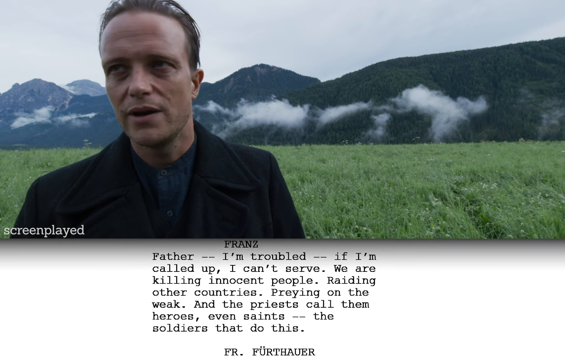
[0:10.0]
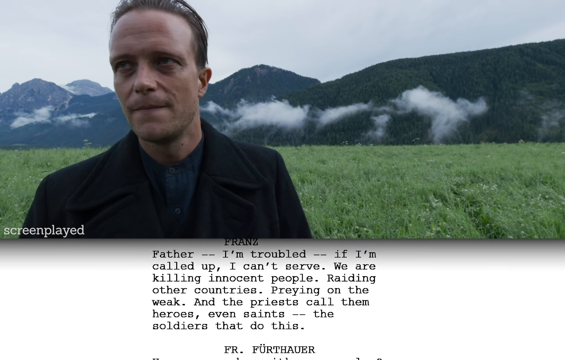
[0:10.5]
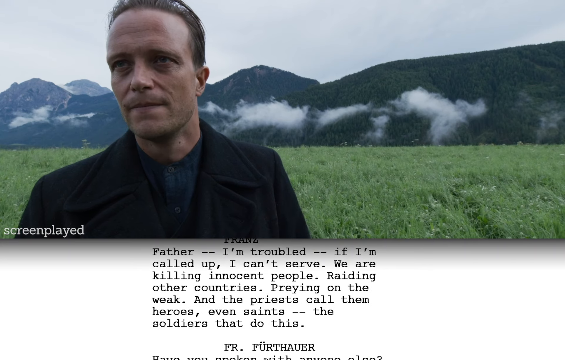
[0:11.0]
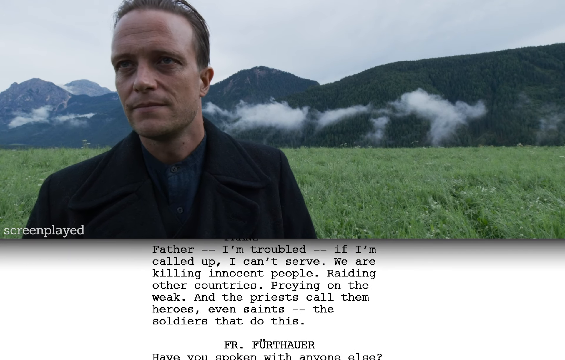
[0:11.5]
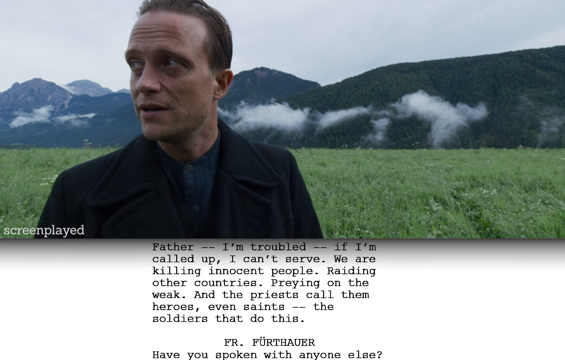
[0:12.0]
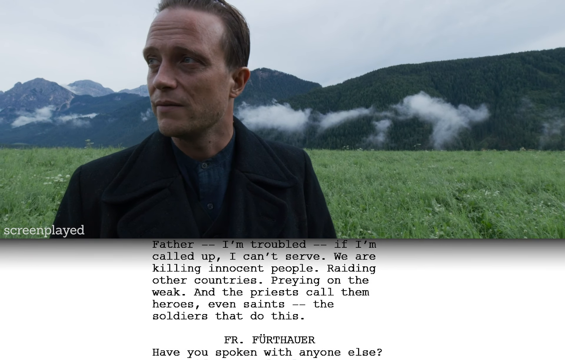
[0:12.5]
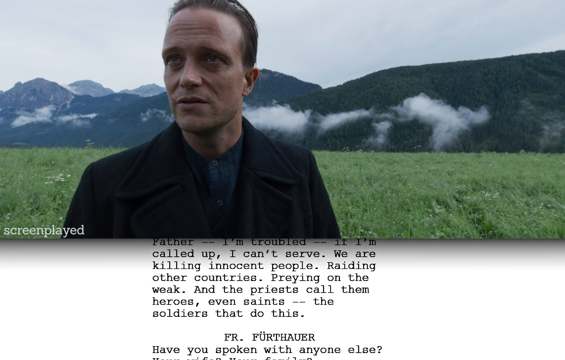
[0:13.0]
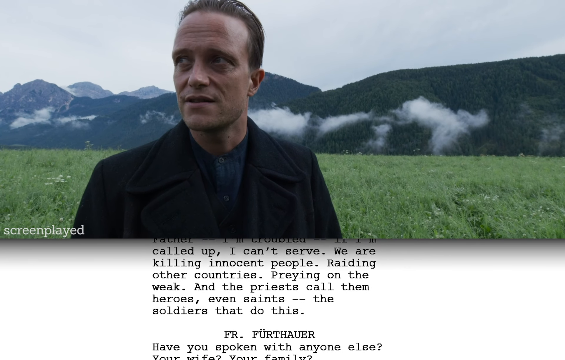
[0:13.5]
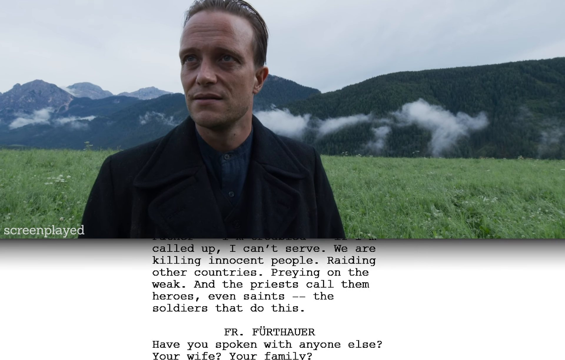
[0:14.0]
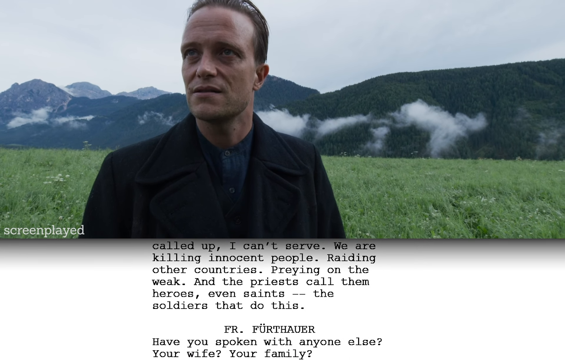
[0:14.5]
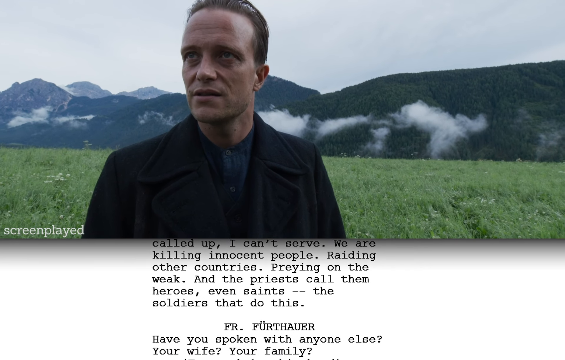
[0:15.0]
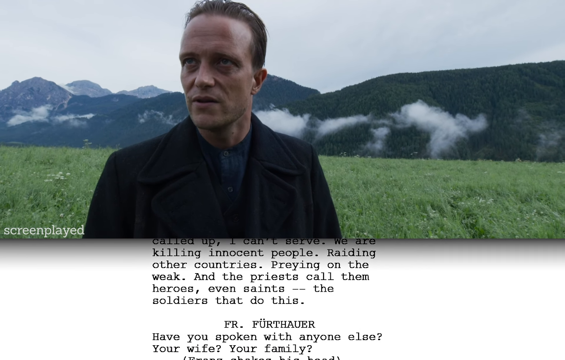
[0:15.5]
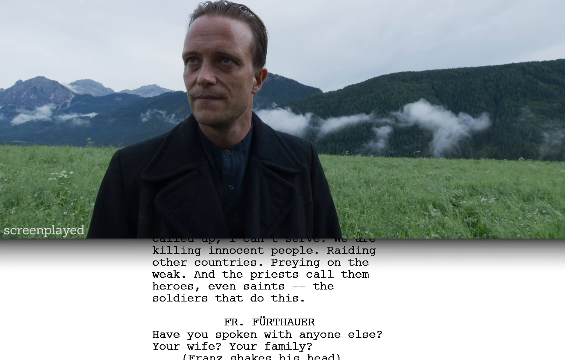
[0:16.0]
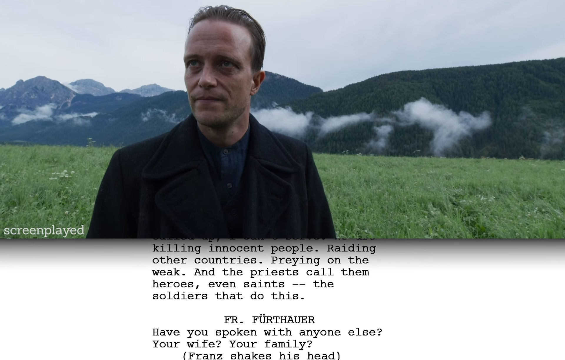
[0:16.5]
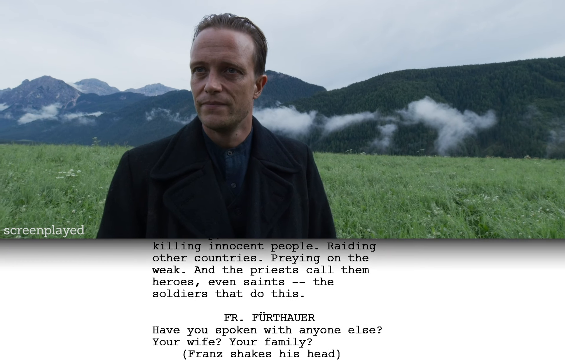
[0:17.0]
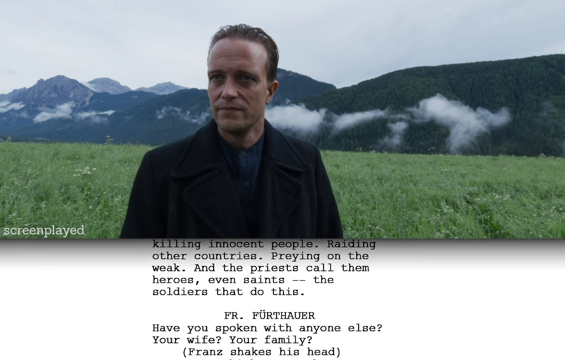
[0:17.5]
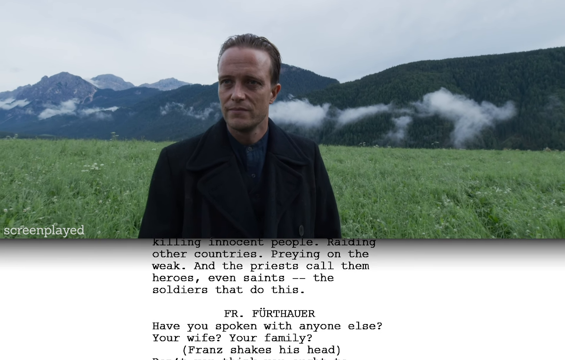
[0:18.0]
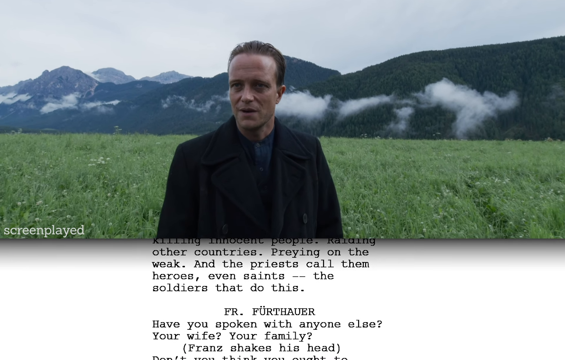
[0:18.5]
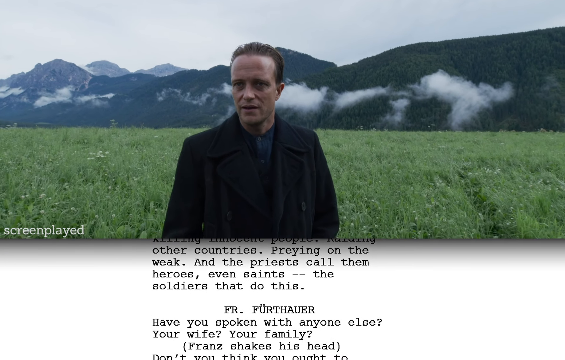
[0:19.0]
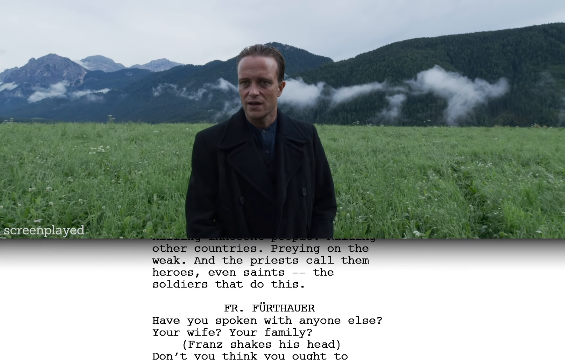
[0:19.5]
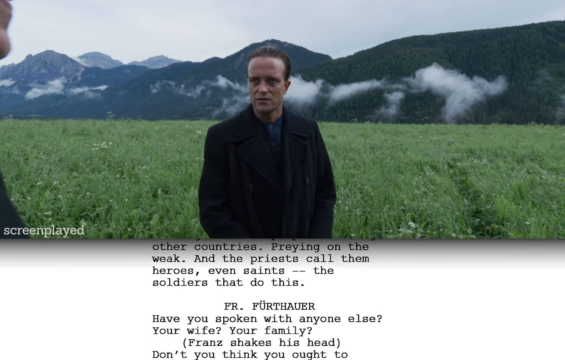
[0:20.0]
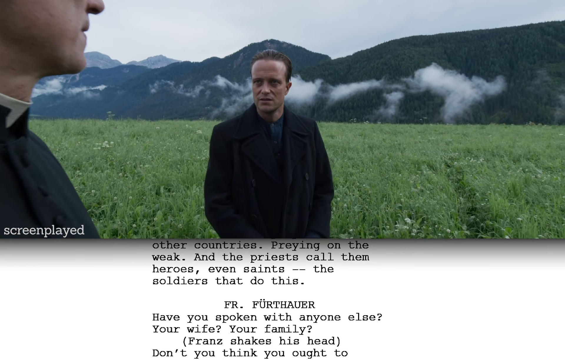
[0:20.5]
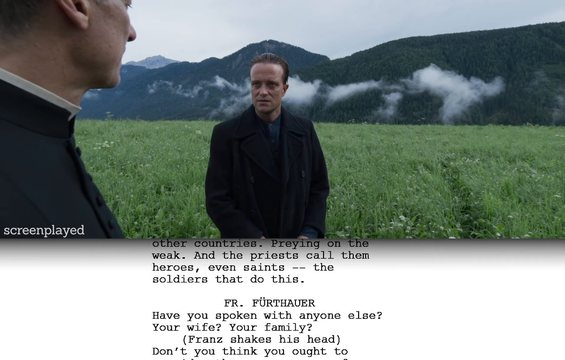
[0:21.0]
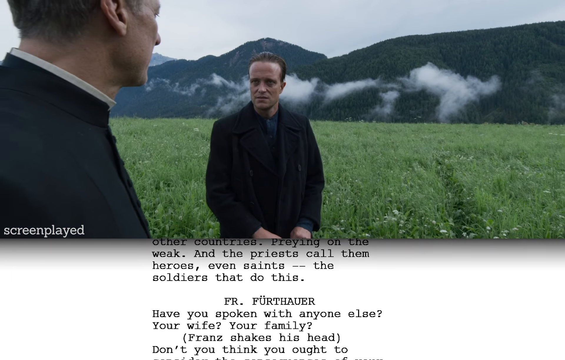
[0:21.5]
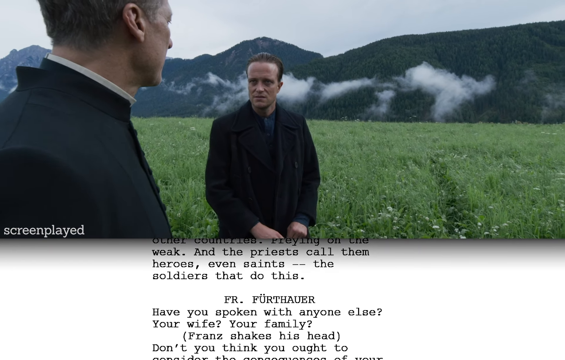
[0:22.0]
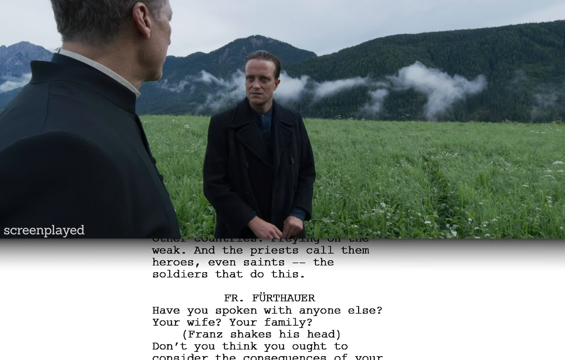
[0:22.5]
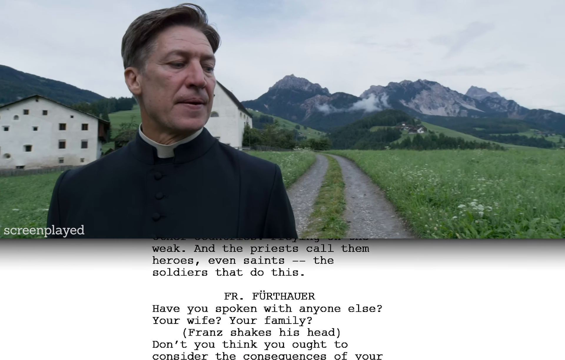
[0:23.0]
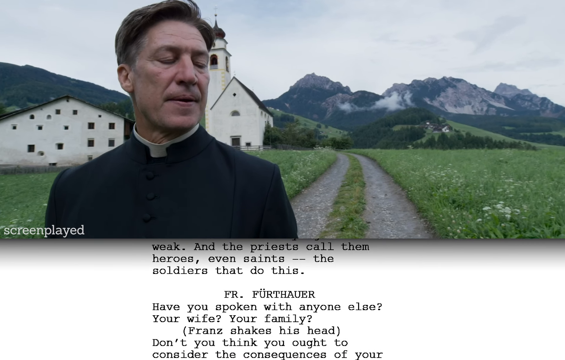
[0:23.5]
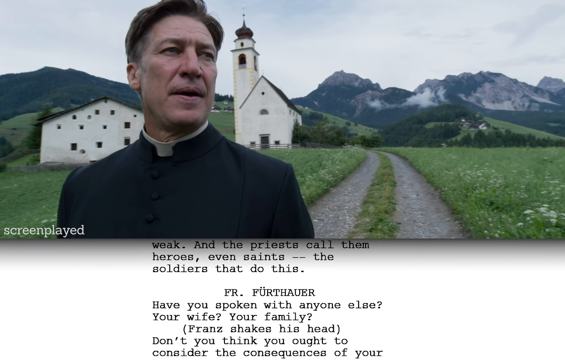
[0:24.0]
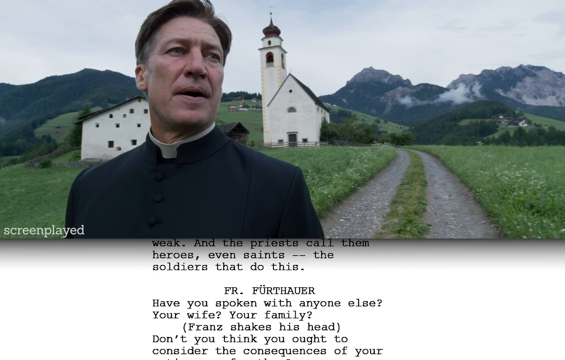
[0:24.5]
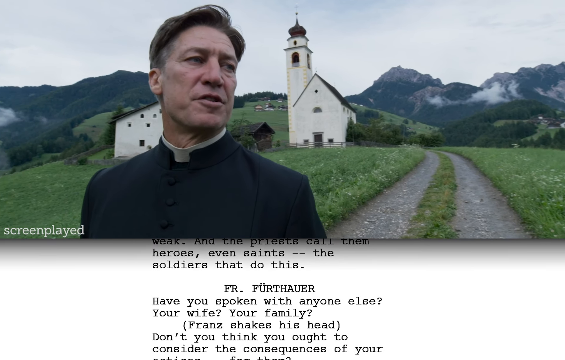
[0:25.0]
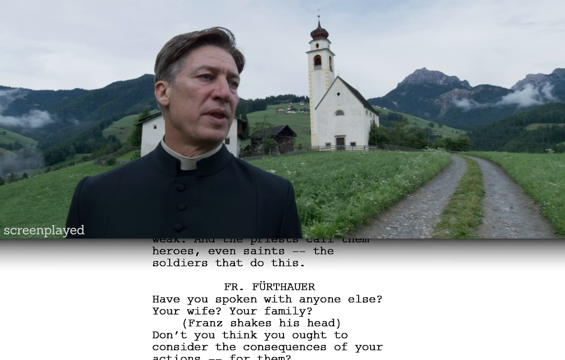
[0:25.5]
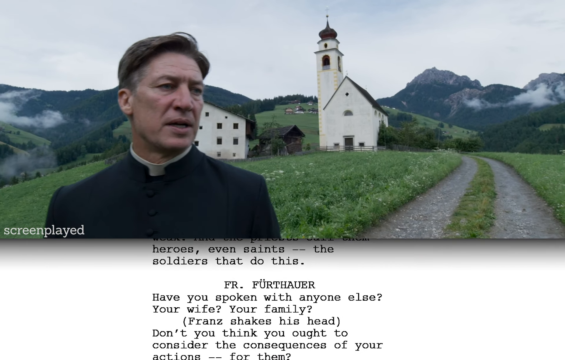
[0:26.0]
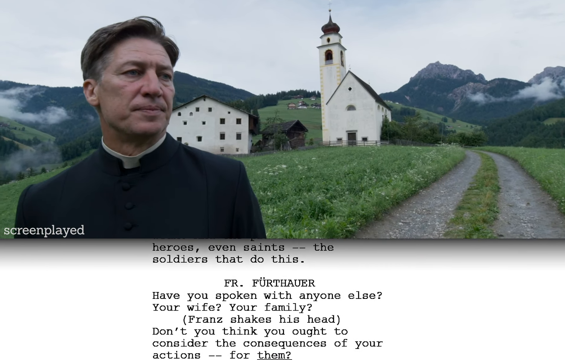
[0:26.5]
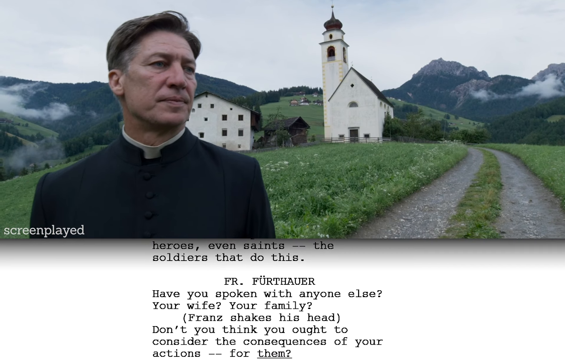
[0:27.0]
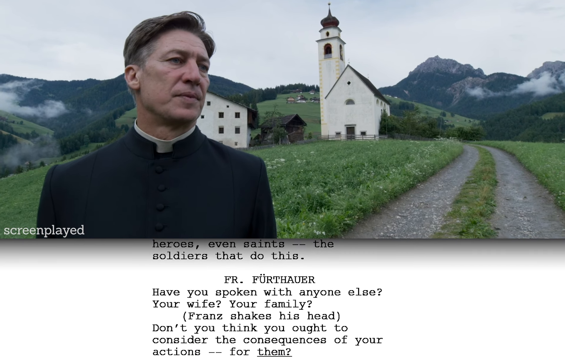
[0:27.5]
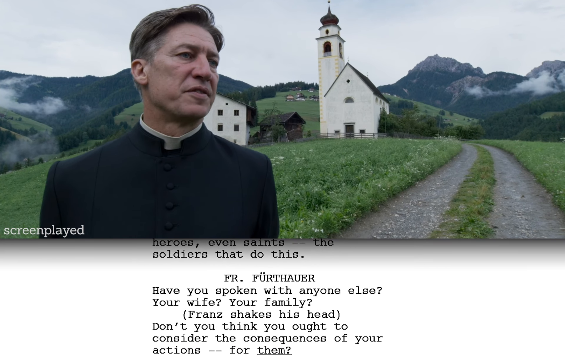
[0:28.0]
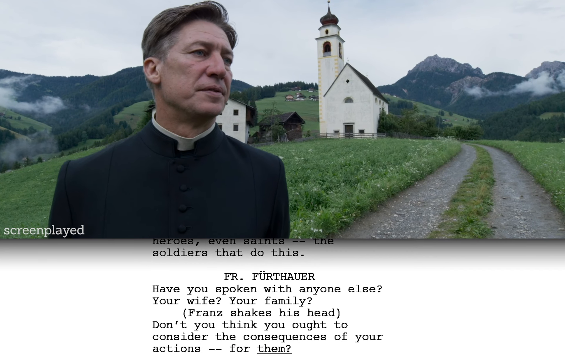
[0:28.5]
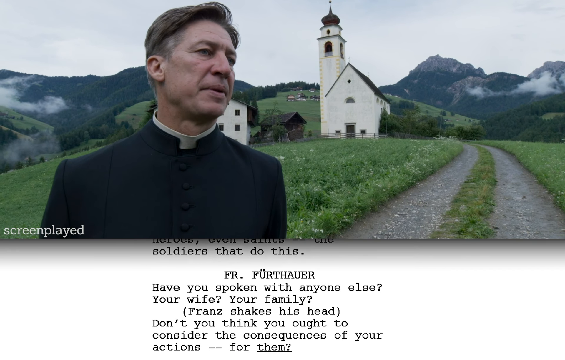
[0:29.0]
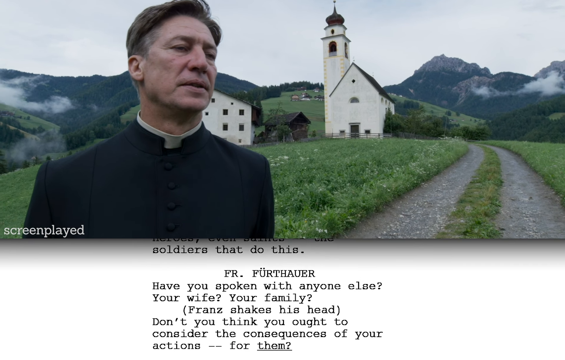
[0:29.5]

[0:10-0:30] A story is relayed in text at the bottom of the screen, reading: "Father, I am troubled. If I'm called up, I can't serve. We are killing innocent people, raiding other countries, preying on the weak, and the priests call them heroes, even saints, the soldiers that do this." The camera zooms in on the man on the left-hand side, then zooms out to show both men at once, then zooms in on the man on the right-hand side, who is clearly a pastor. A closer look at the buildings shows that there are two buildings, with more buildings behind them; this is apparently the pastor's church. He has a very serious look on his face.